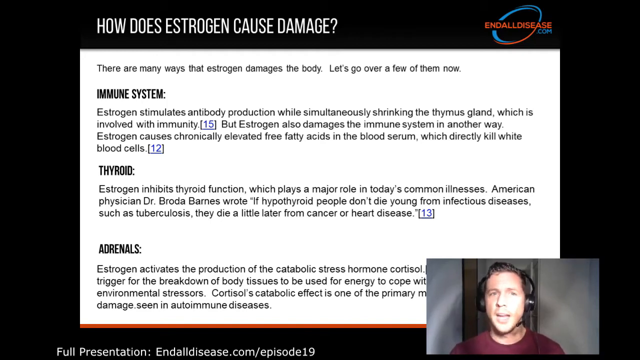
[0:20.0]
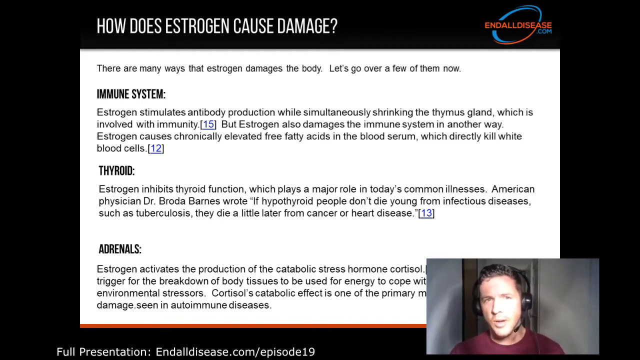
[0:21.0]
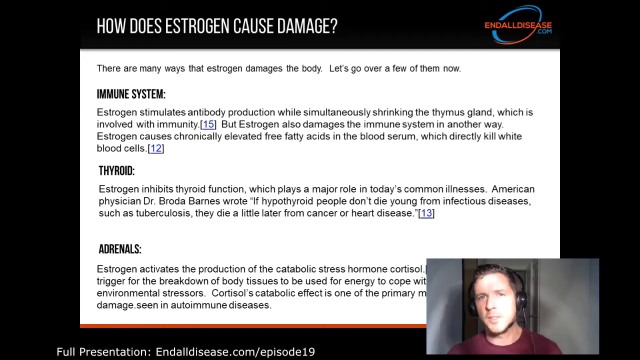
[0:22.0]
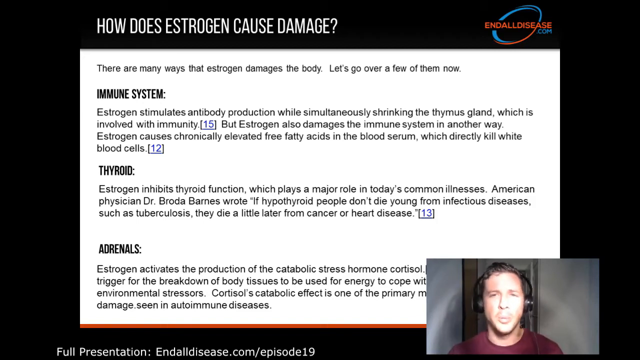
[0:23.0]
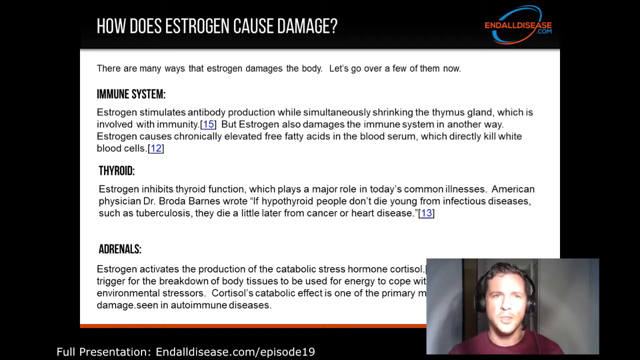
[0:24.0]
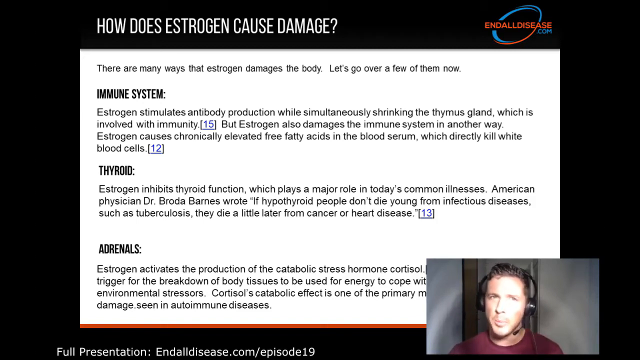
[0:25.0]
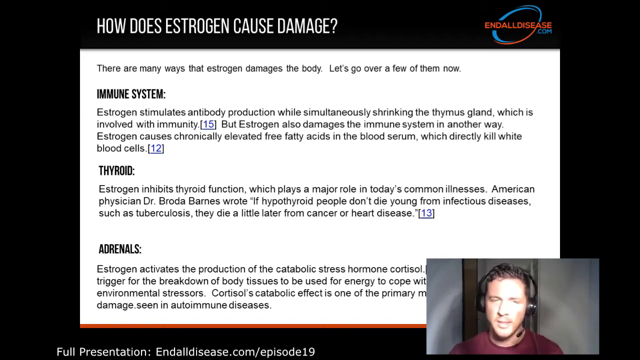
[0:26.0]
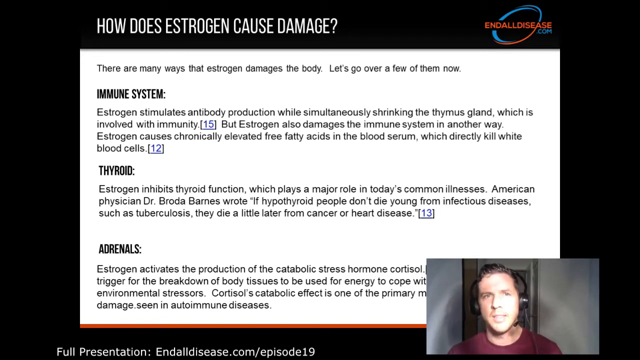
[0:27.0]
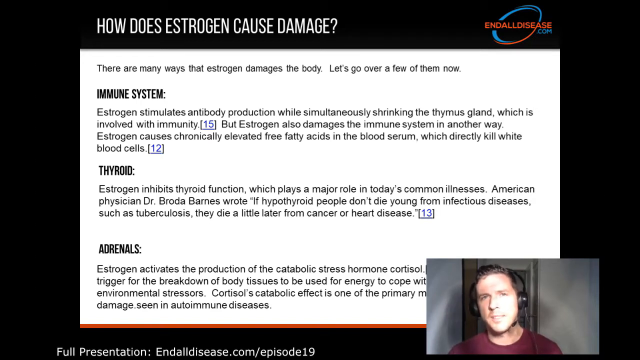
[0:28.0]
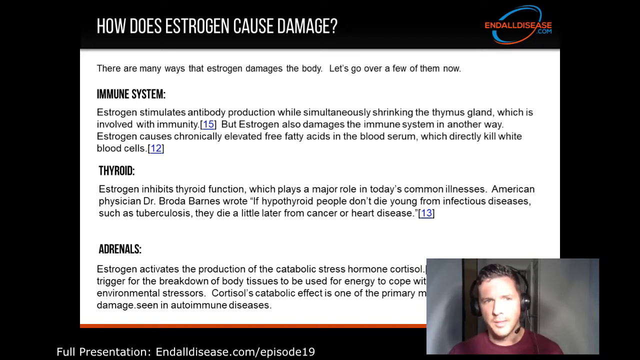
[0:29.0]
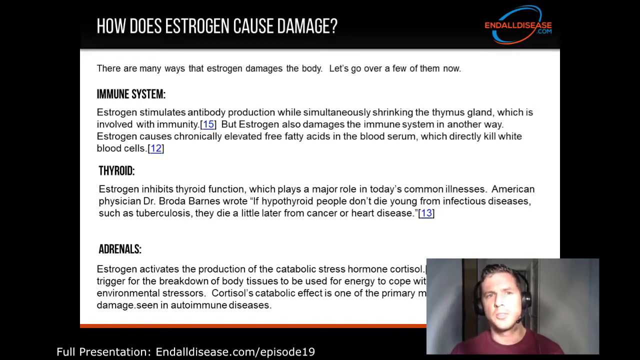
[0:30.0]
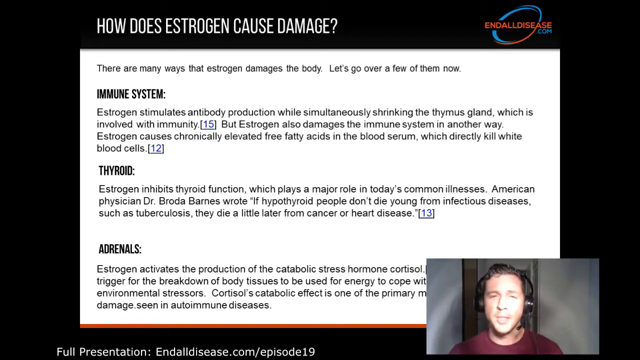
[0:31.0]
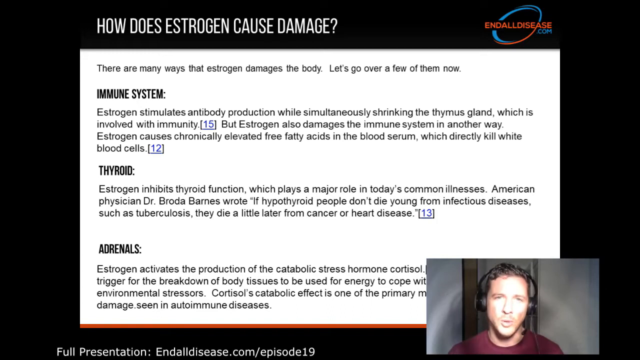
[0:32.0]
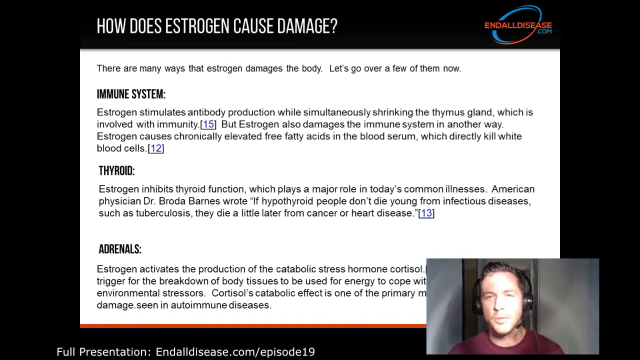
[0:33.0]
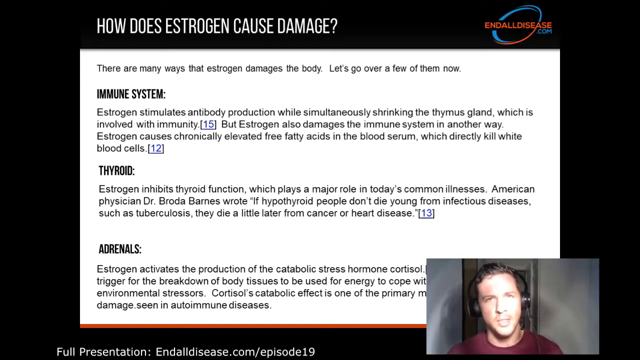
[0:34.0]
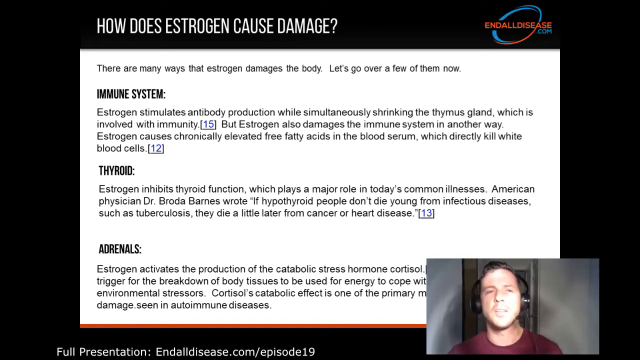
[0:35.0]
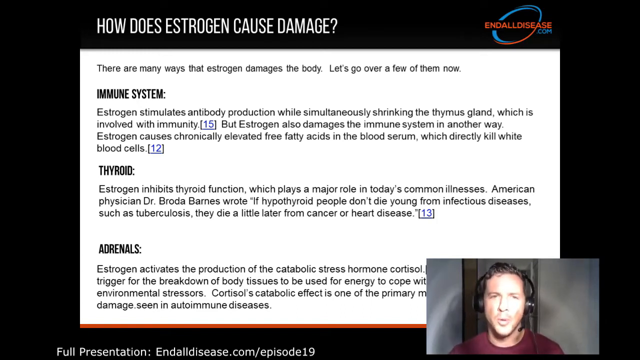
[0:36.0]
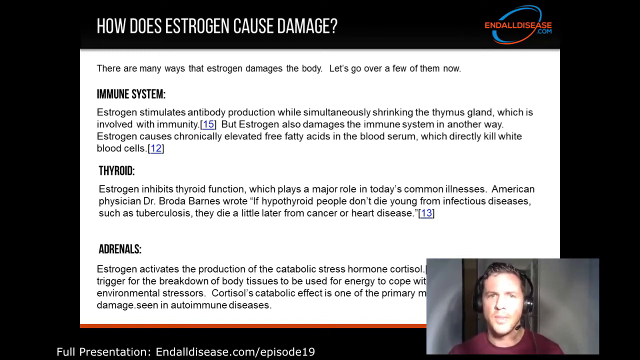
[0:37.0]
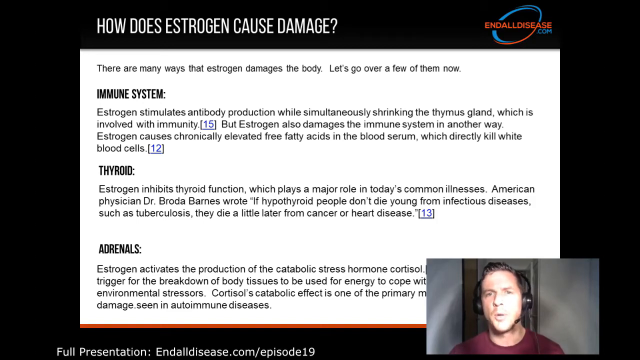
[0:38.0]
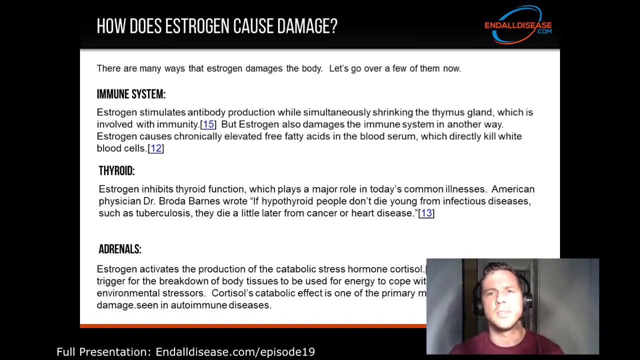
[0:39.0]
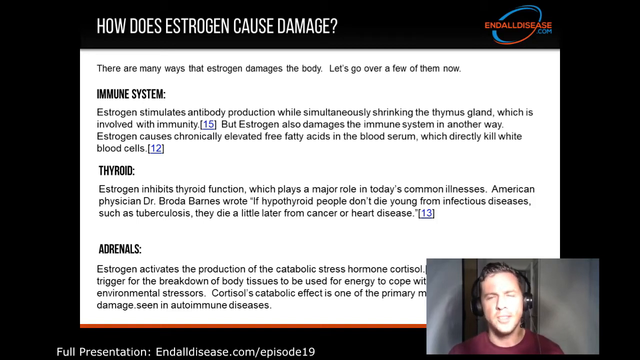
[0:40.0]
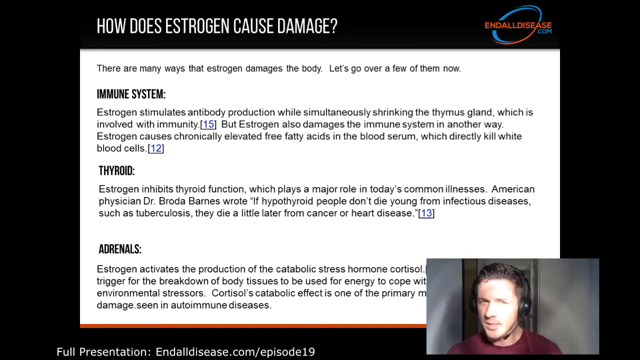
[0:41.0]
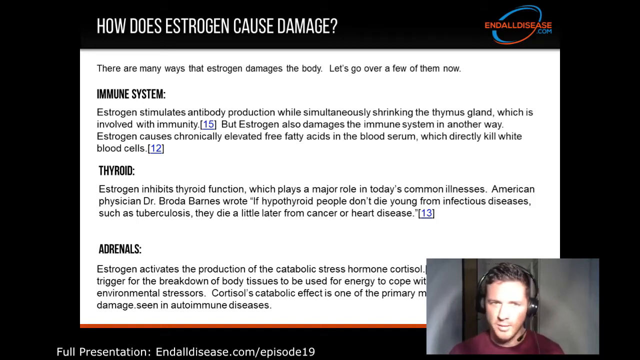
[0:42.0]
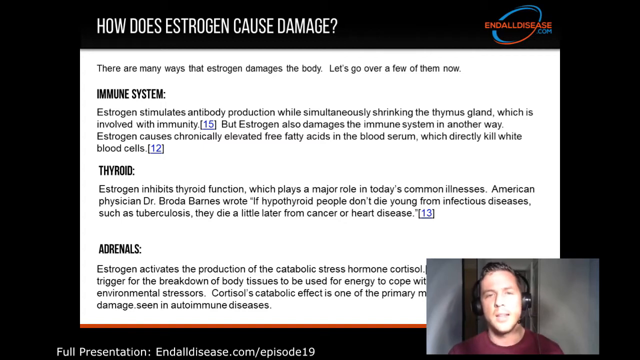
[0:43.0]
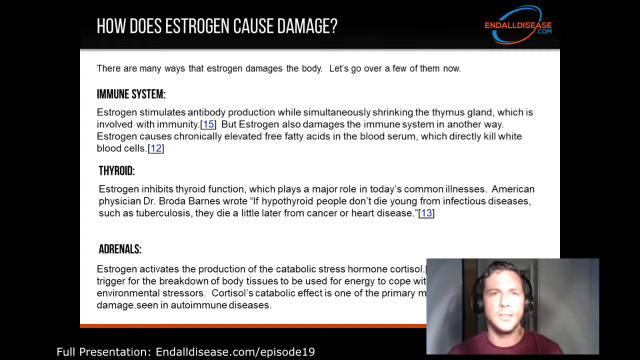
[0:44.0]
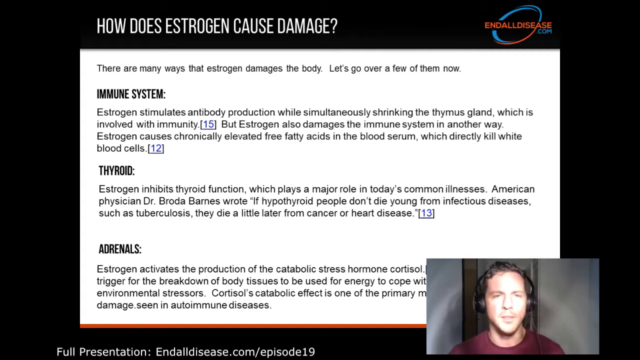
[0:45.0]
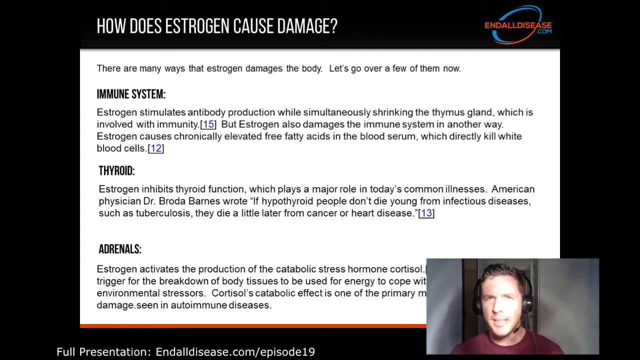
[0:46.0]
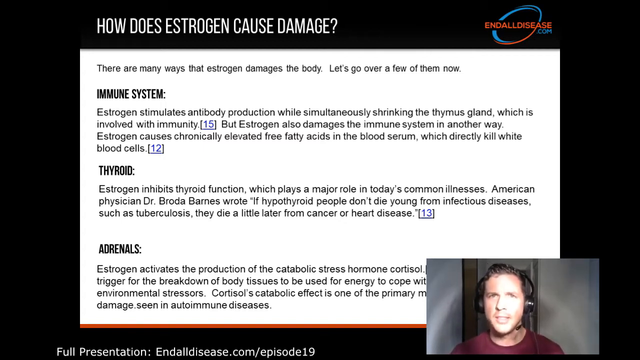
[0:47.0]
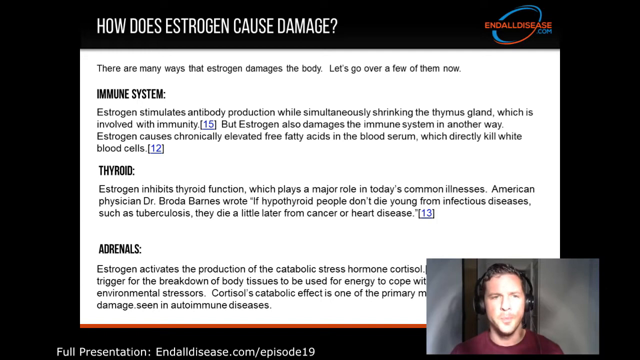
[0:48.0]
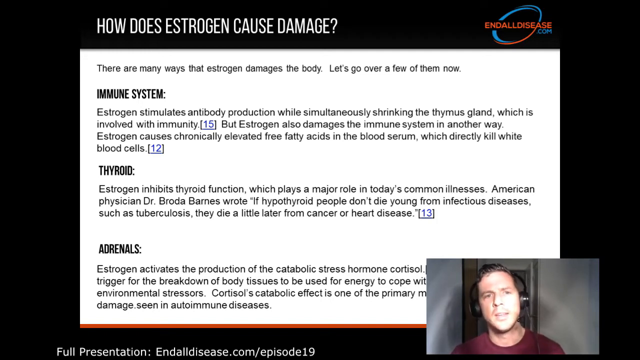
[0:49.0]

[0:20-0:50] A close-up of a page of text shows the header "How Does Estrogen Cause Damage?" at the top, with a logo to the right that says "ENDALLDISEASE.com." In the text box below are three headers with categories of the ways estrogen damages the body. The paragraph under "Immune System" indicates that estrogen stimulates antibody production and also shrinks the thymus gland, which damages the immune system. Under "Thyroid," the text explains, among other things, that estrogen inhibits thyroid function. Below that, the header "Adrenals" has text reading "Estrogen activates the production of the catabolic stress hormone cortisol." In a small video box in the lower right corner, a man wearing headphones speaks to the camera. At the very bottom of the screen, text says "Full Presentation: endalldisease.com/episode 19."